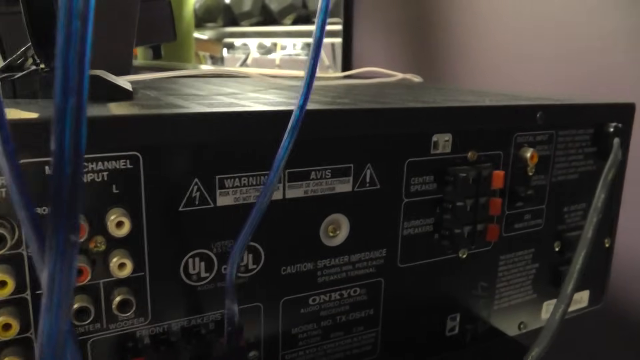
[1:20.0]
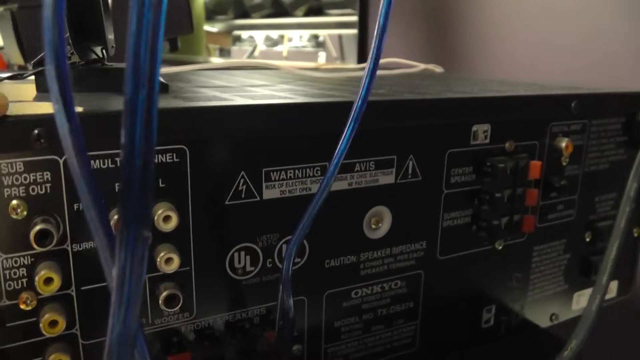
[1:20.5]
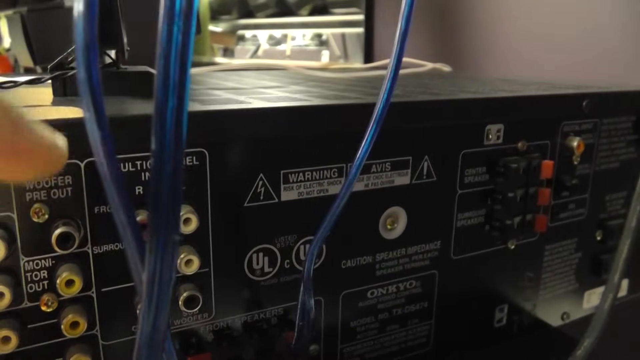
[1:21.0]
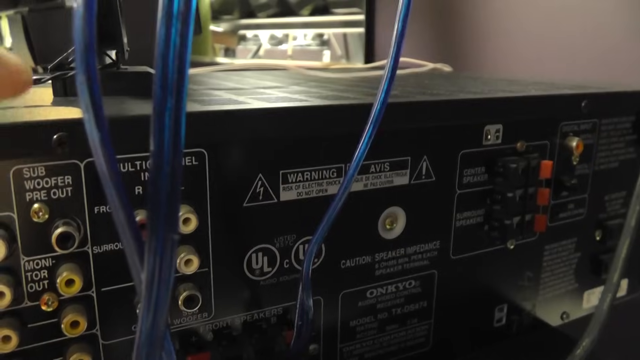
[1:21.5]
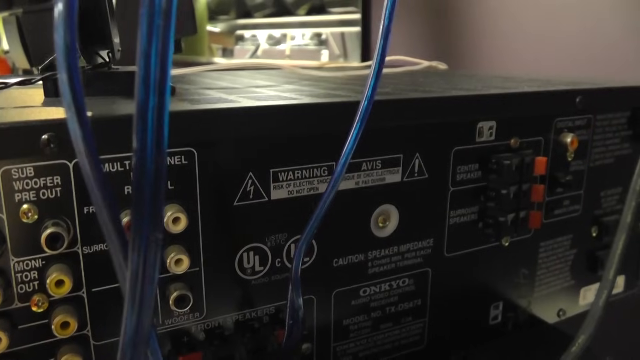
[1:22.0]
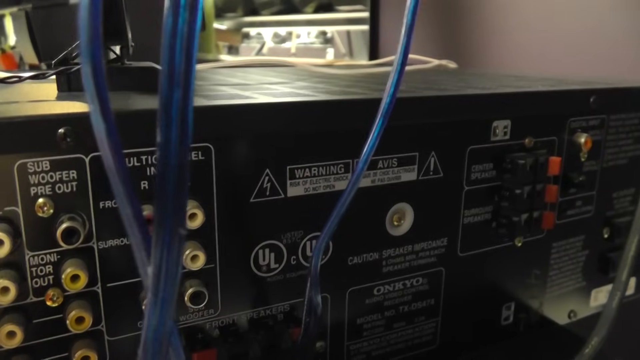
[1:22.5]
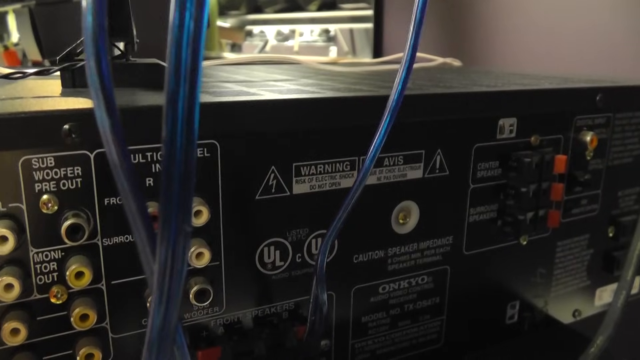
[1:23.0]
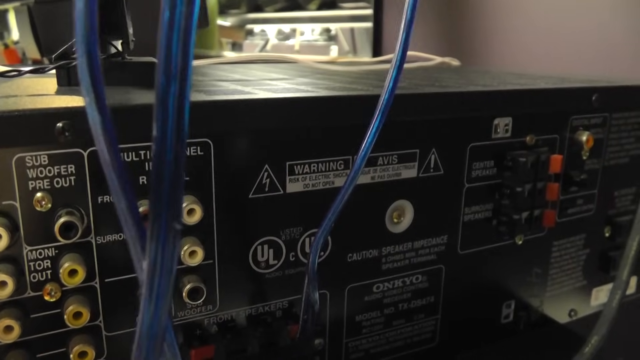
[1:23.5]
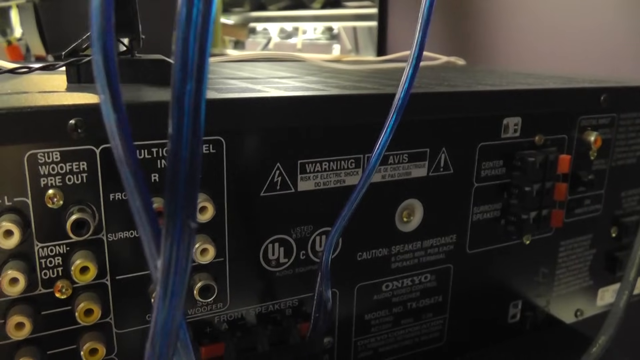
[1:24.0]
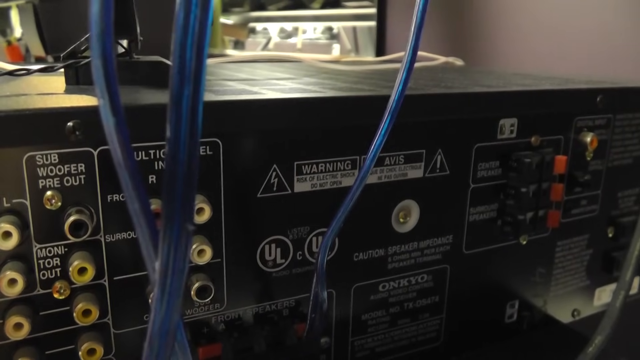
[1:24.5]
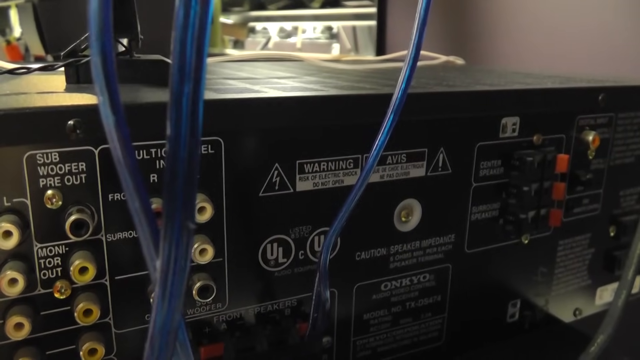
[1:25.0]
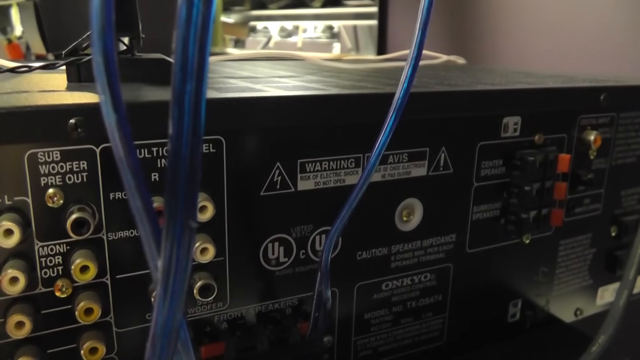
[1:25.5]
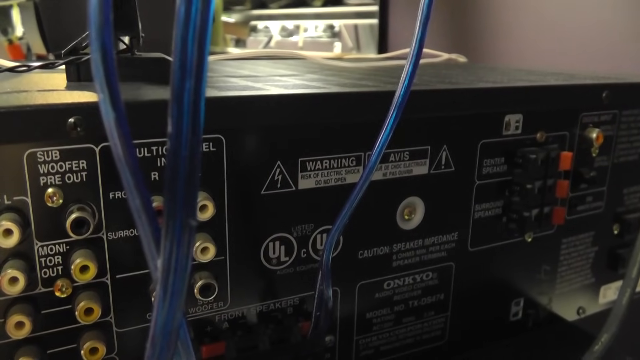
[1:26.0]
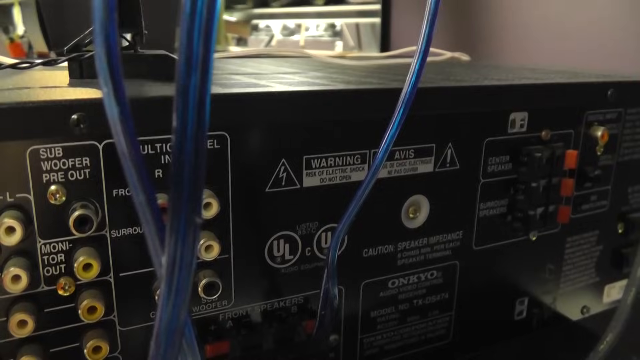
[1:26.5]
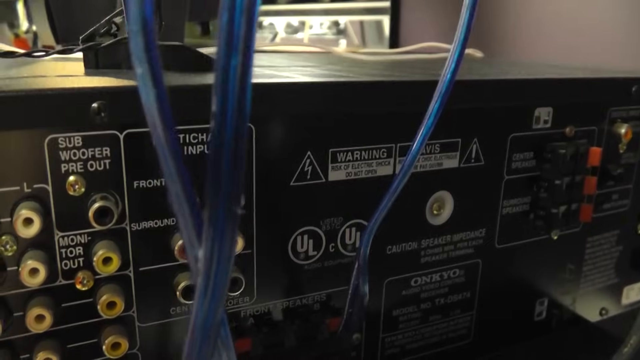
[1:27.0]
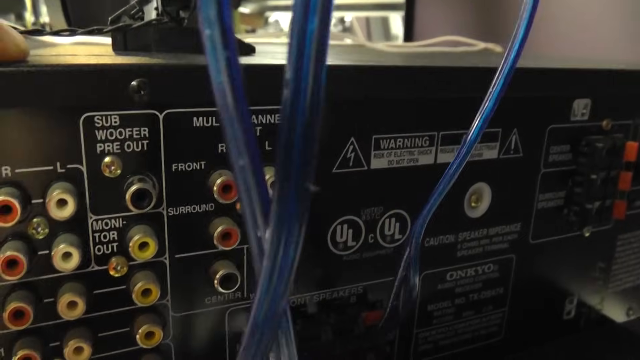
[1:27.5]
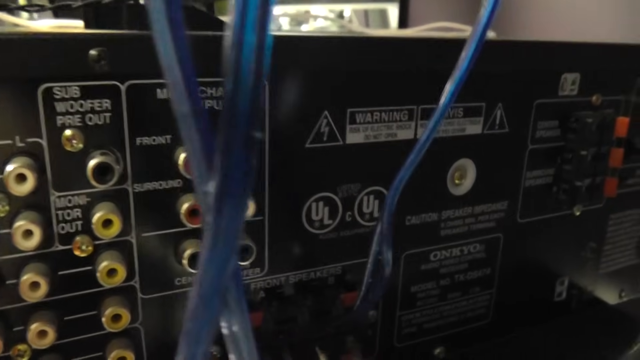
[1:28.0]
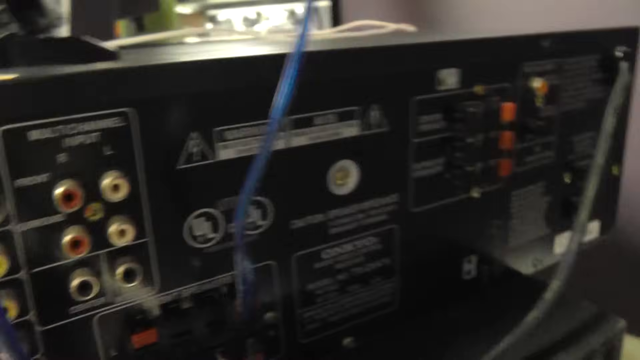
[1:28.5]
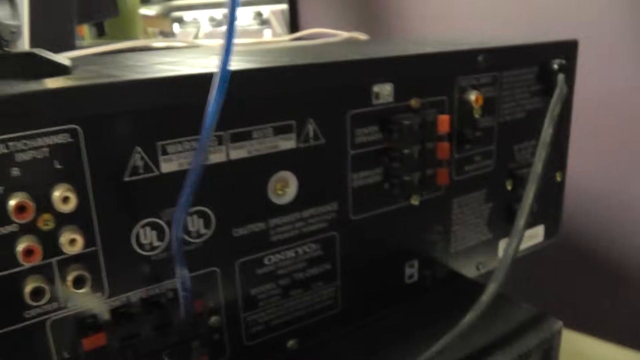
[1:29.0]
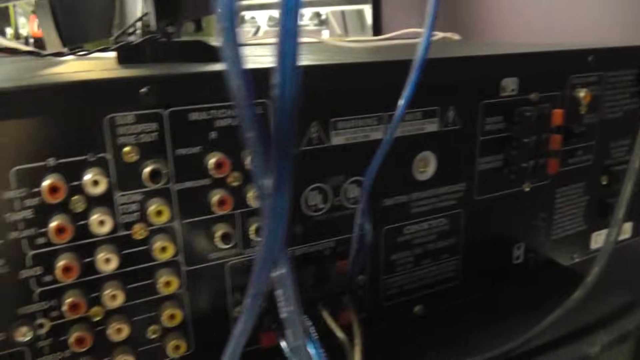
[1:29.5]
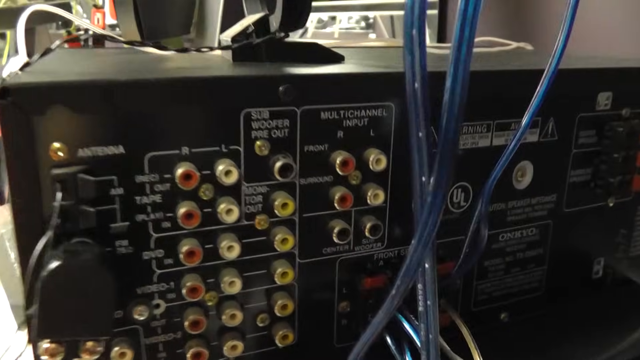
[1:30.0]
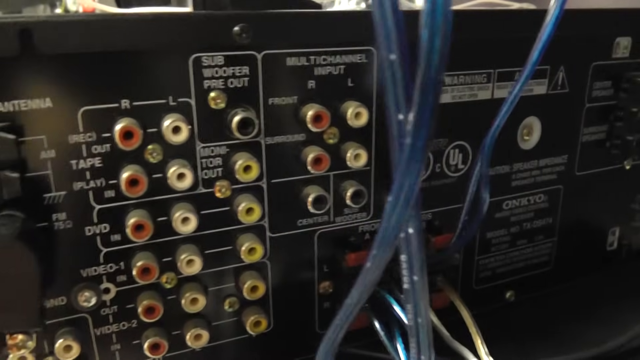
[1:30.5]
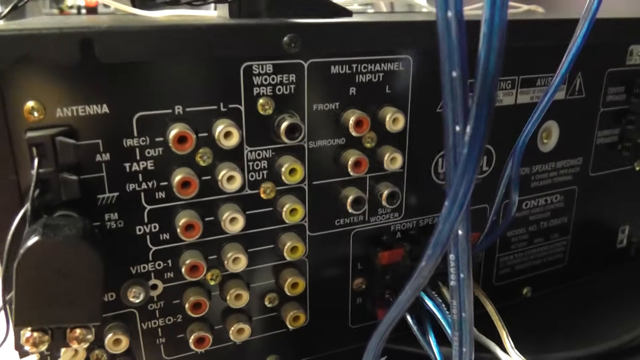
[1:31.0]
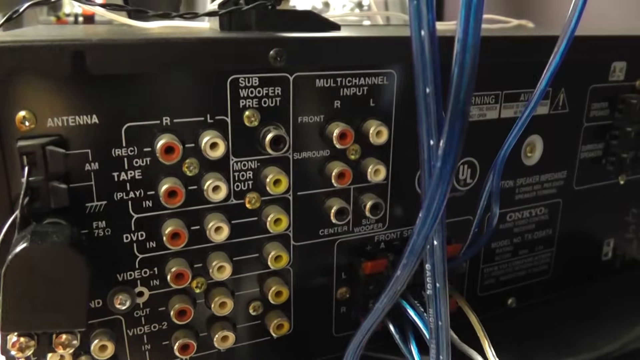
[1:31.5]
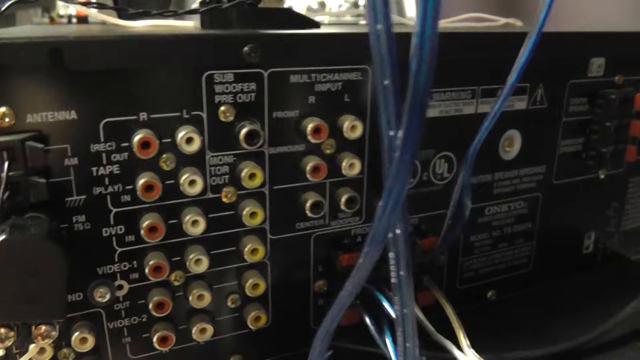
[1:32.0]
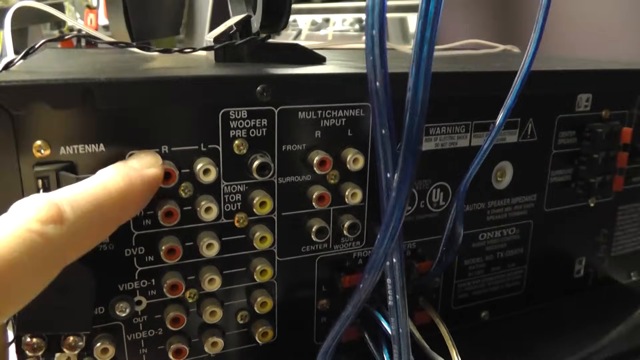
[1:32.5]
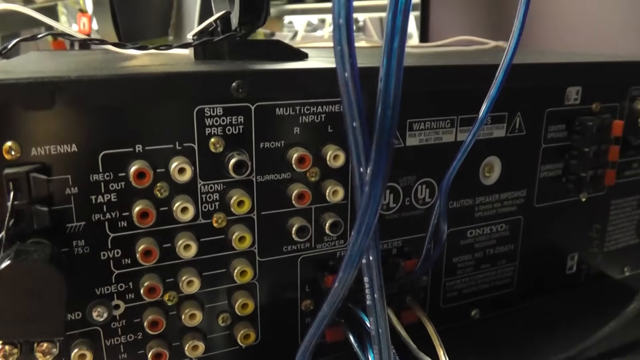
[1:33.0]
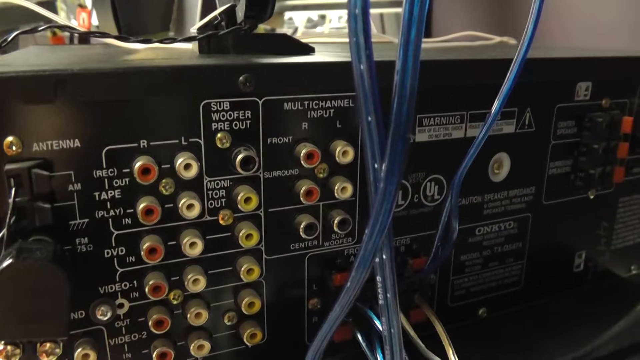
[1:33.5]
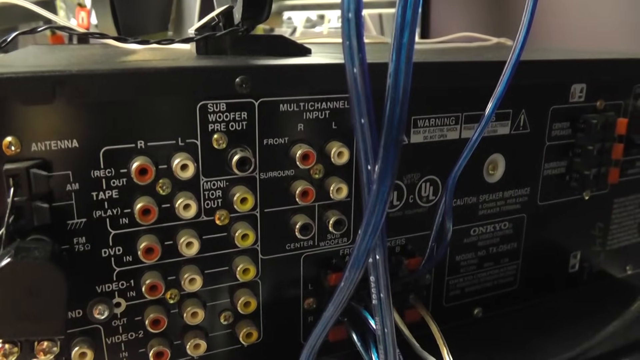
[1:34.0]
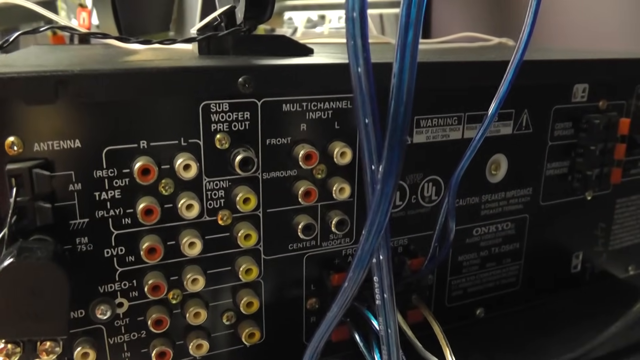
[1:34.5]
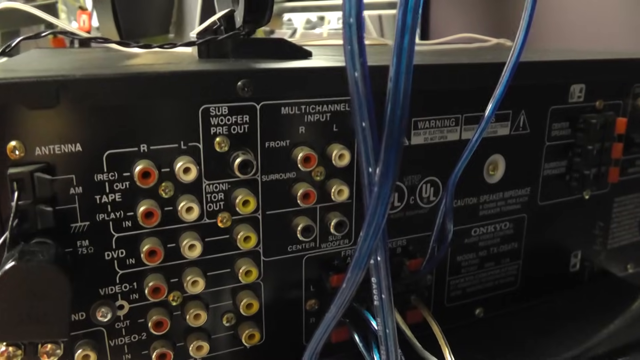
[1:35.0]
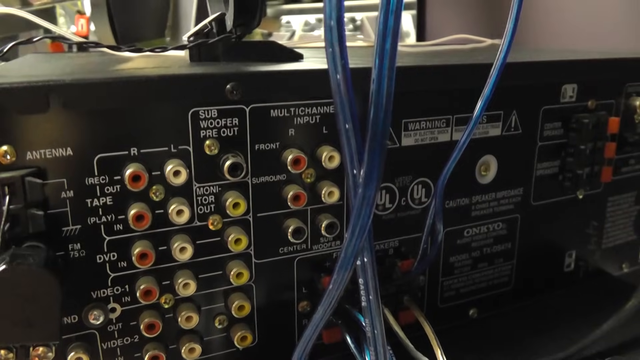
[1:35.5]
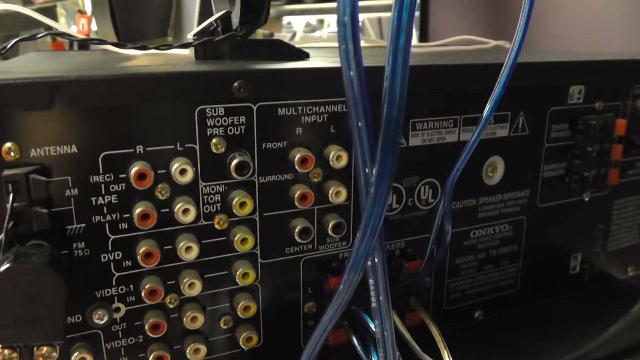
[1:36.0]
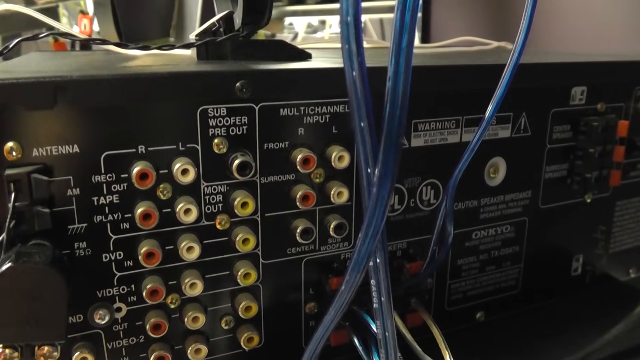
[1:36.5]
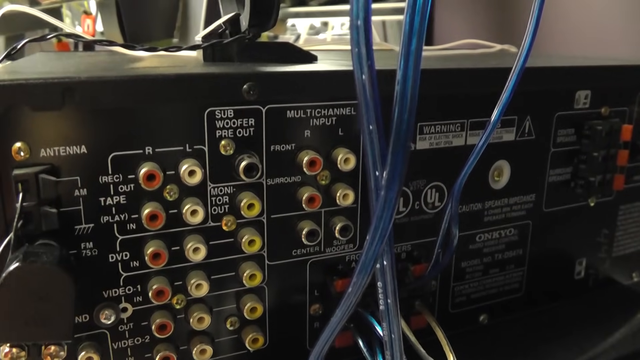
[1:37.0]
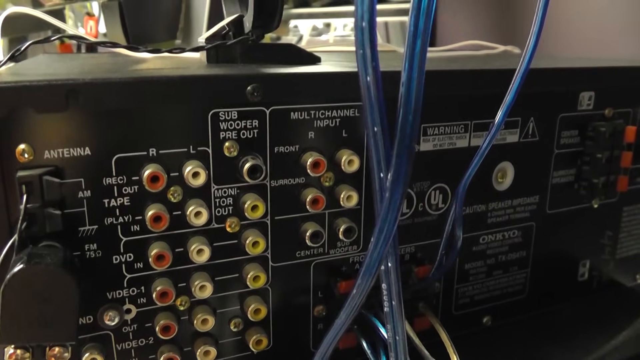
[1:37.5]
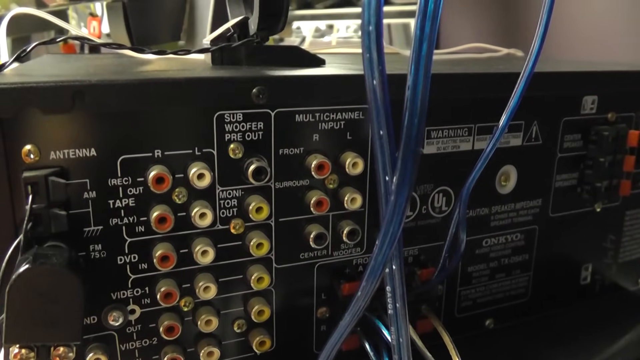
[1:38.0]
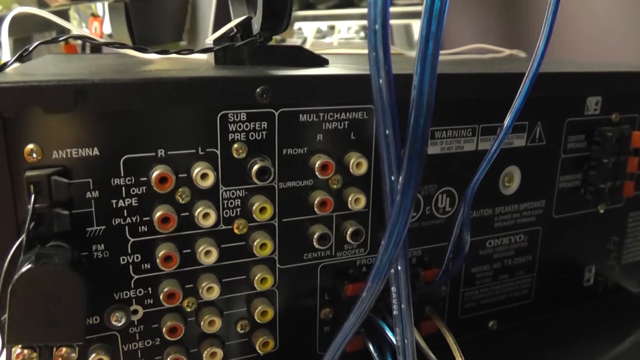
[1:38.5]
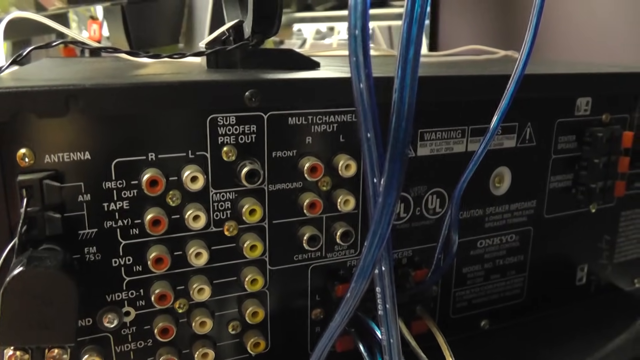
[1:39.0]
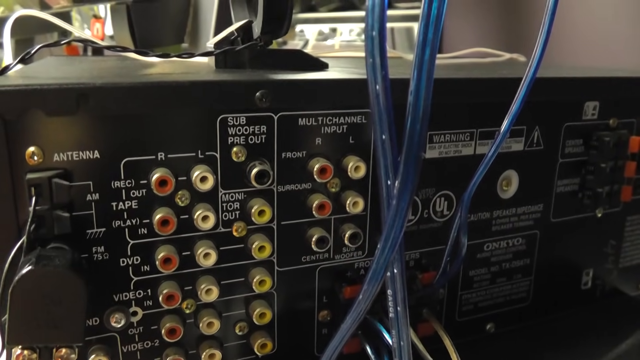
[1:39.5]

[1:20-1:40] The console is close up, taking up most of the screen and at times the entire screen, and it is being moved or is very unsteady. The hand starts pointing to the right side of where the red plug-ins are. Labels read "subwoofer pre-cut" and "monitor output" as he pans across the entire back, then "antenna". Concentrating on the right, it says "tape, play, or record", and below that "DVD". It looks like it could be an older type of console. There are two circles, both with UL in them. Toward the left it says "antenna, AM, FM", and another plug-in is plugged in there, a black circle that is square toward the top with a rounded bottom. Then the speaker comes into view and he points to the right. The object looks very unsteady, with multiple writing on the back. Moving to the front, the warning is in a rectangle.